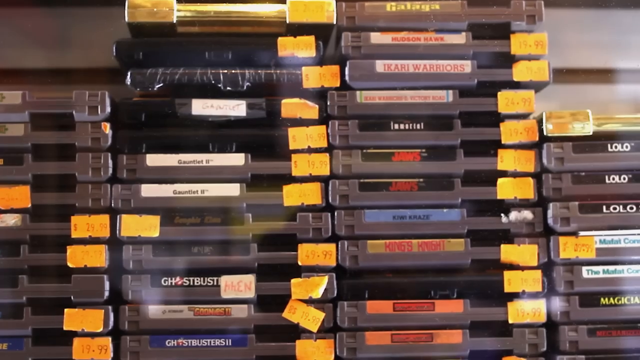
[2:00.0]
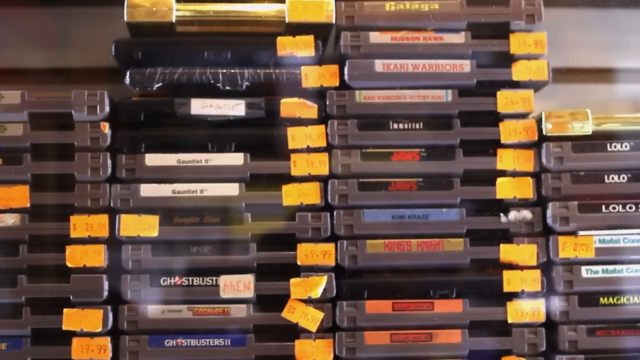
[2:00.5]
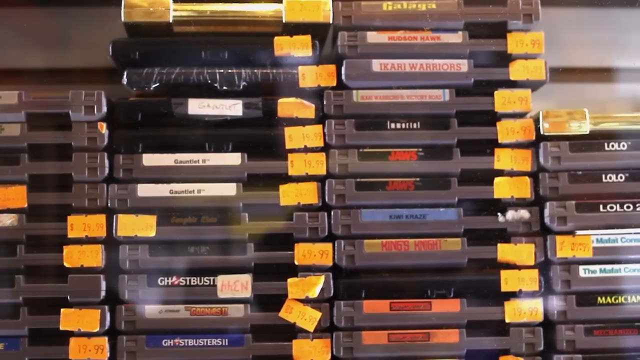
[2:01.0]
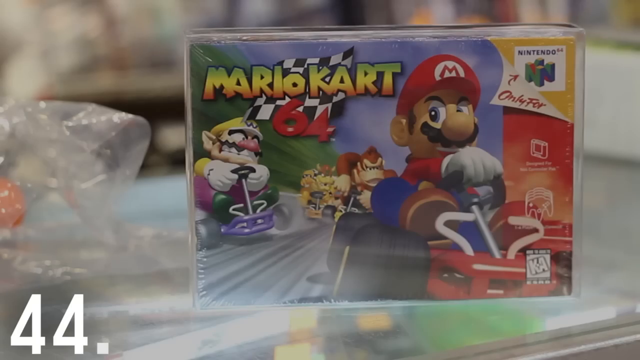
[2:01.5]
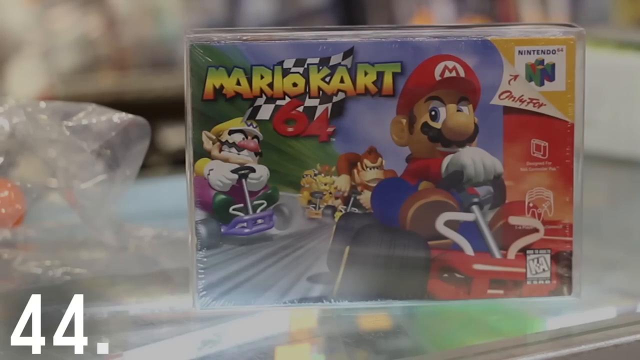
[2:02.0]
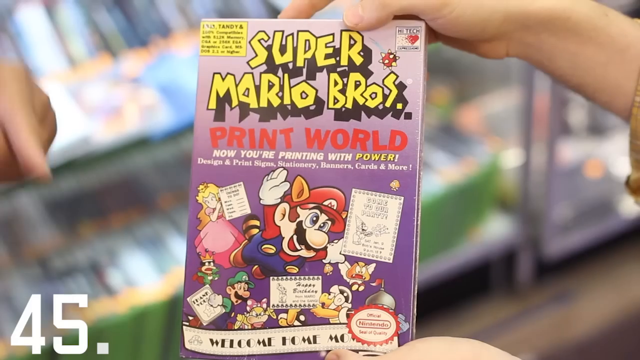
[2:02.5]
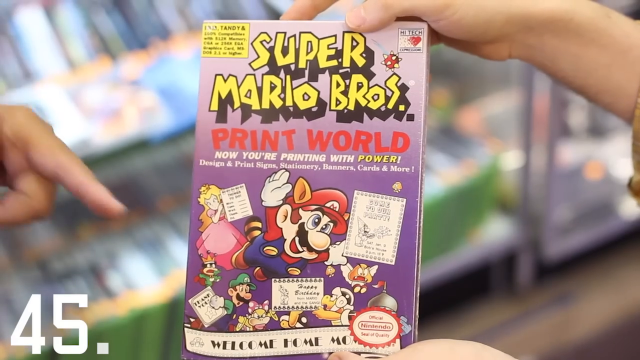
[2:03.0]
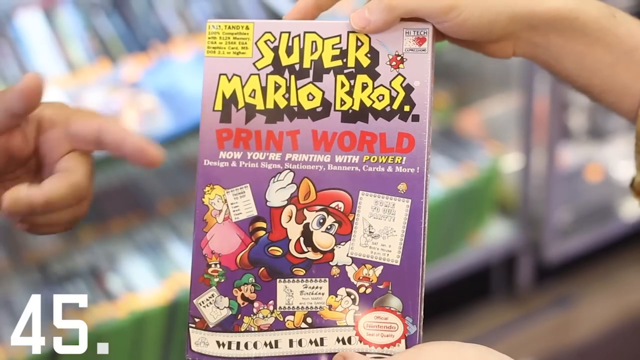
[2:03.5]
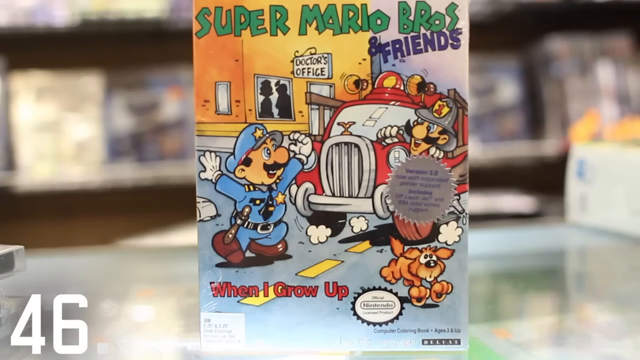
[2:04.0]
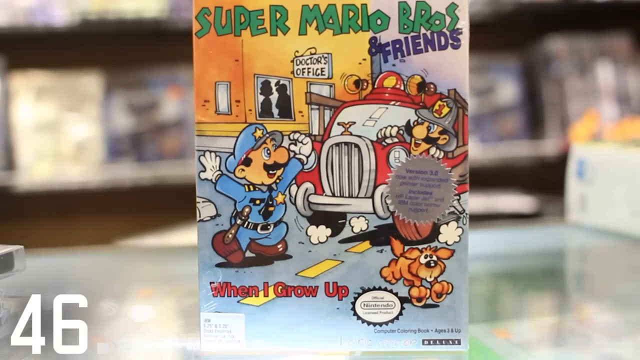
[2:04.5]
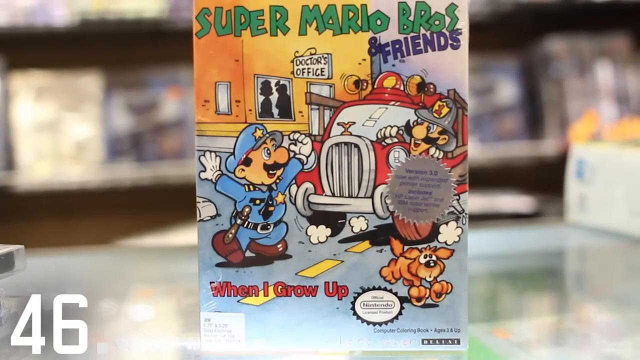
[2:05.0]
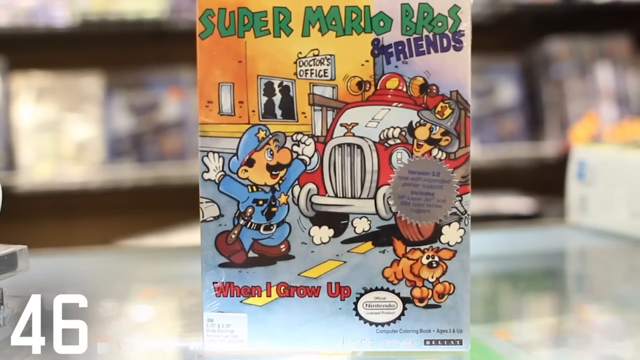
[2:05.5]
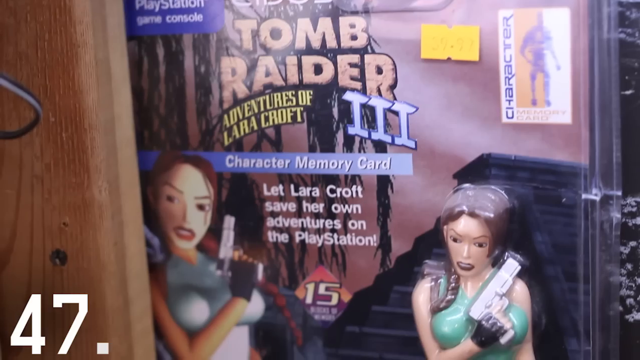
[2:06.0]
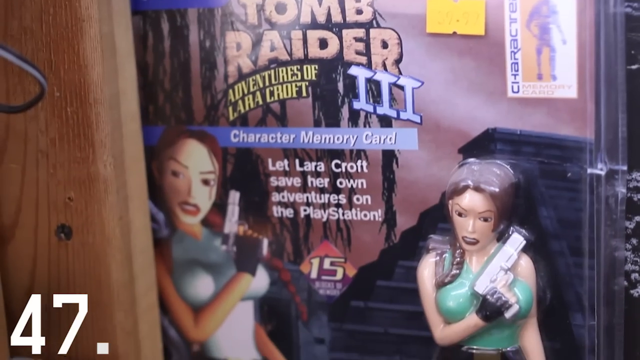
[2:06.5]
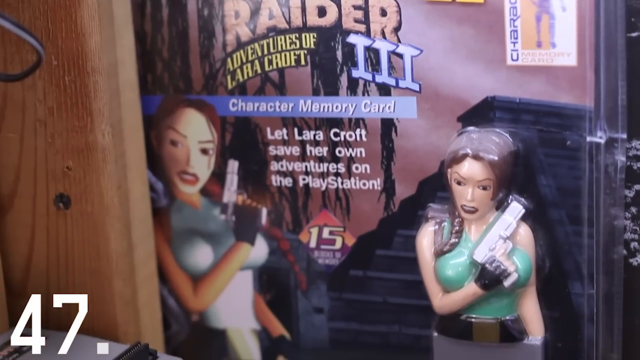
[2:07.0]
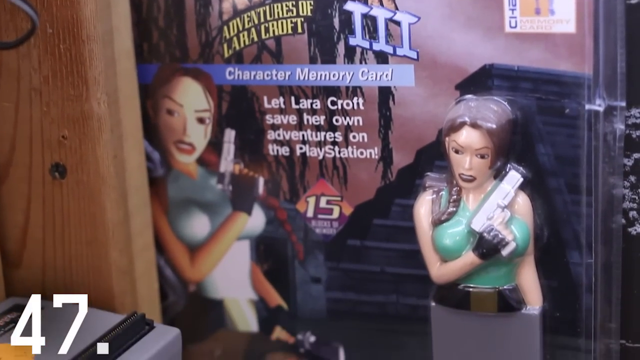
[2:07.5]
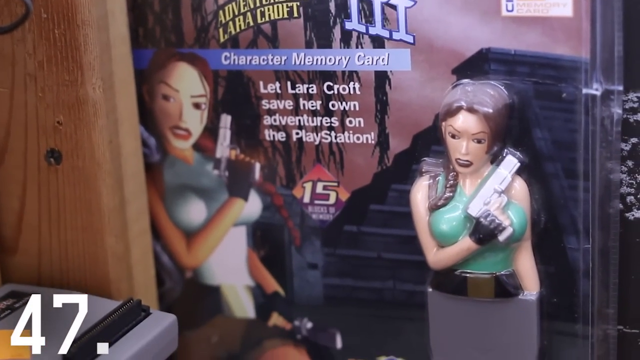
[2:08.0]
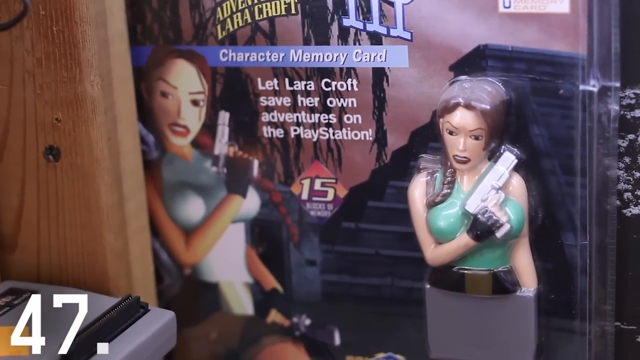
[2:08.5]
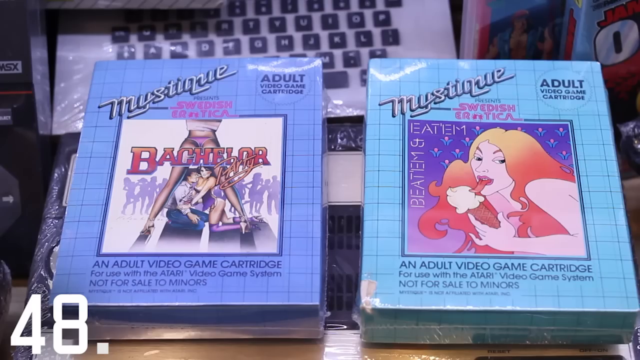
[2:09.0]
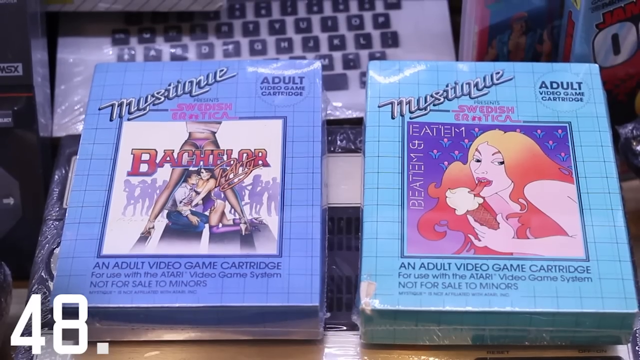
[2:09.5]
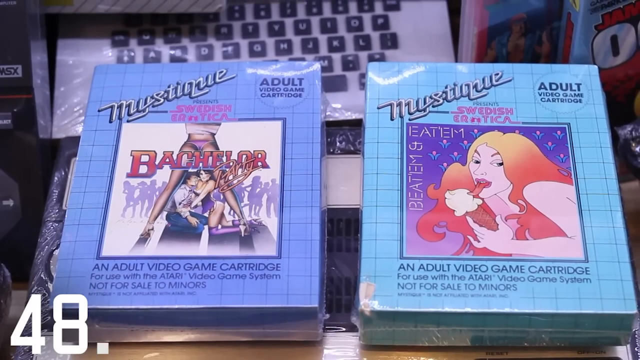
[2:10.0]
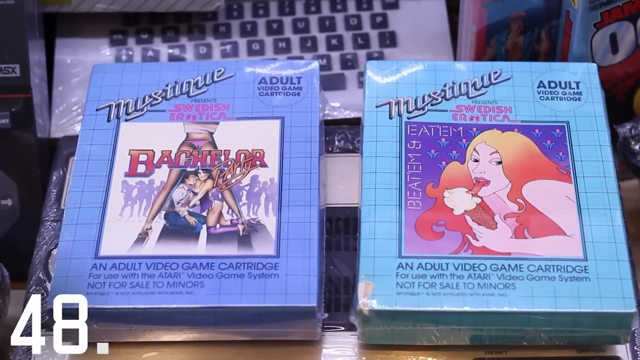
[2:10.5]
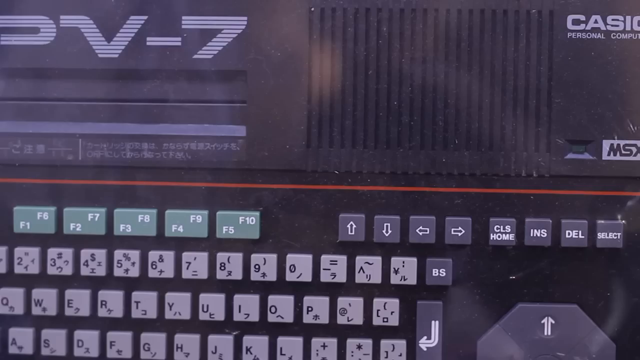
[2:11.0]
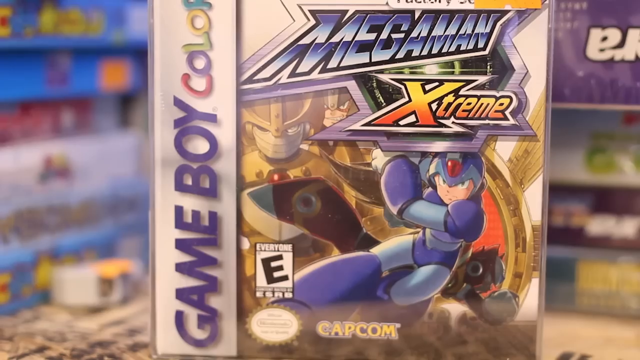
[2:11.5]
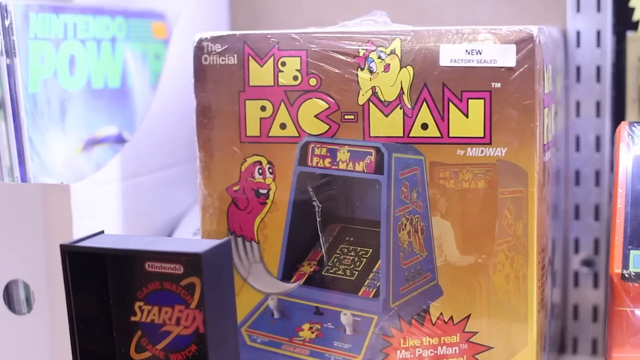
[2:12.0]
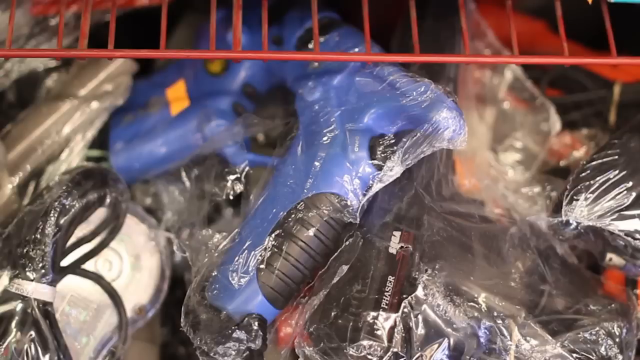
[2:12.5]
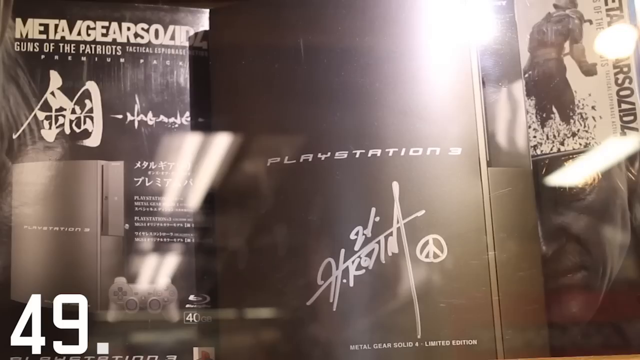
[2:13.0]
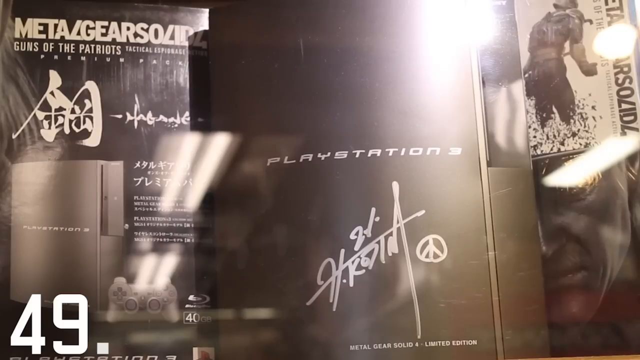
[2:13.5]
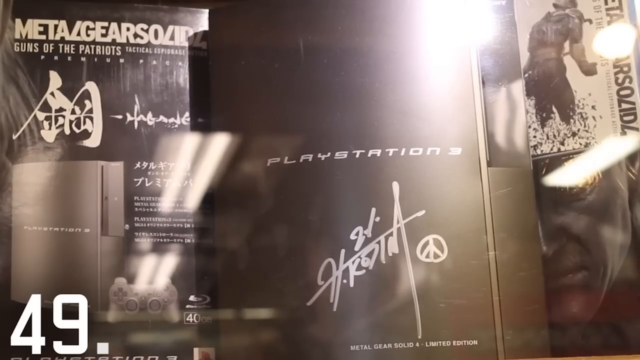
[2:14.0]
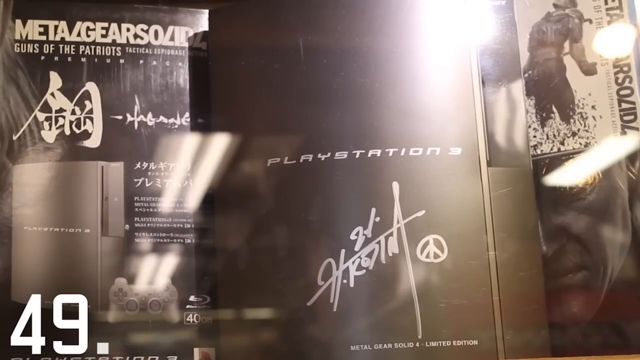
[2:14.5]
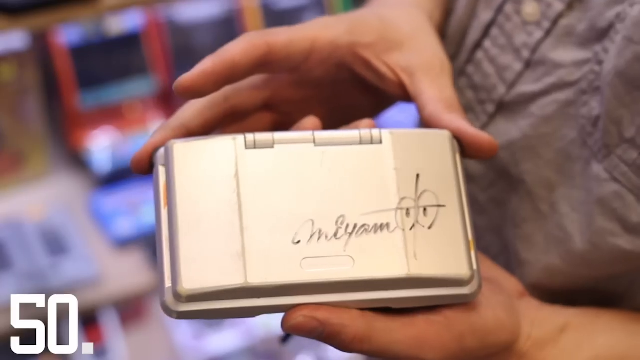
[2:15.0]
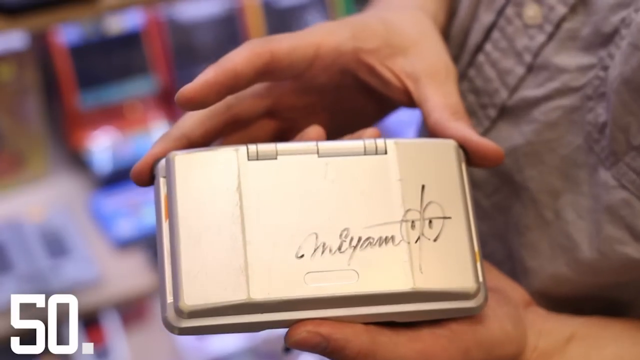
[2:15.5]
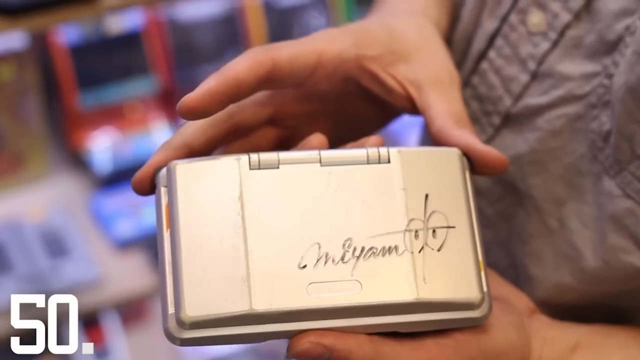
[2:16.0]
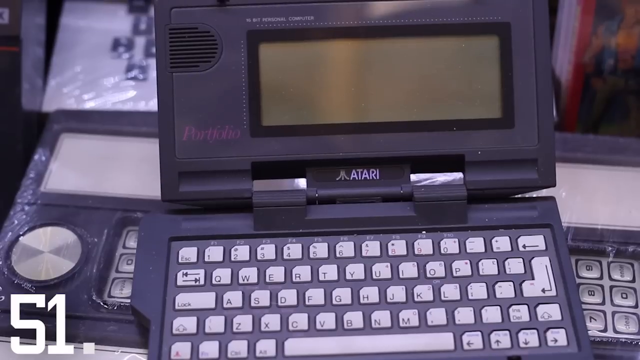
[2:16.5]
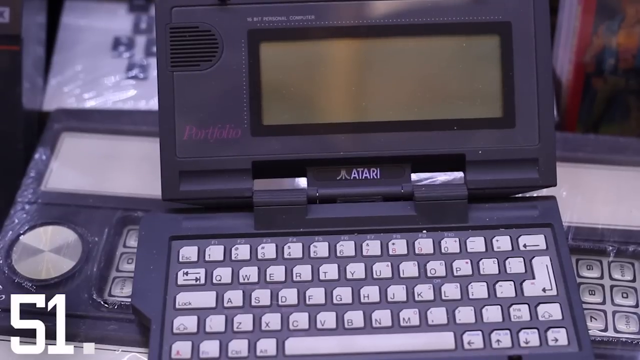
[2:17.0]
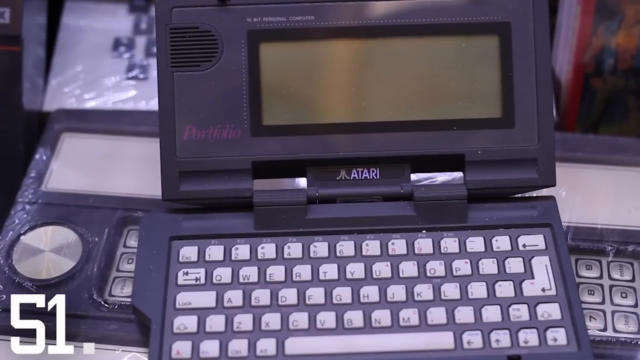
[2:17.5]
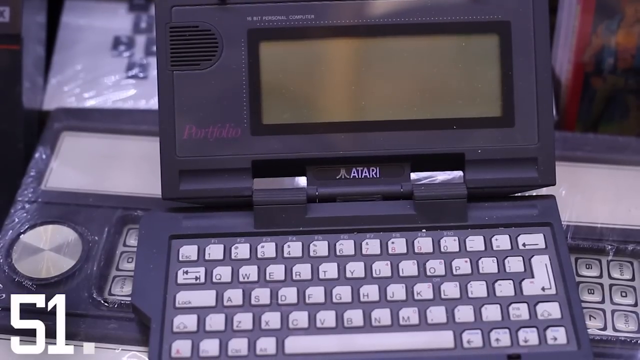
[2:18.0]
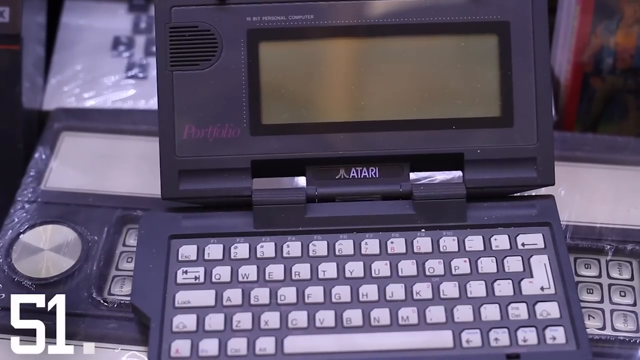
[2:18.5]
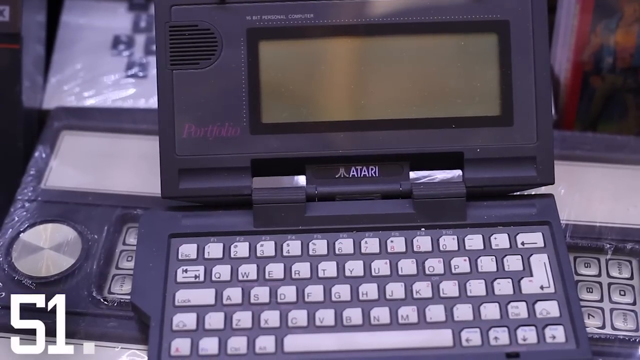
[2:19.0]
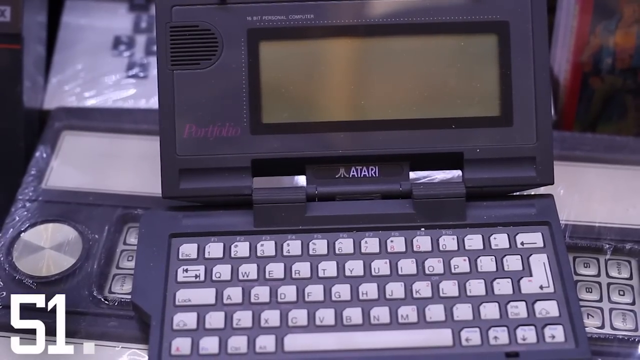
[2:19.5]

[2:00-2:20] A bunch of regular Nintendo cartridges are shown, with titles including Ghostbusters, Ikari Warriors, Jaws, King's Knight and Lolo. The video switches to a sealed box of Mario Kart 64 in what looks like a plexiglass or some kind of hard plastic case, also wrapped in cellophane. Next is something called "Super Mario Brothers Print World" with "Now you're printing with power," possibly a cartridge in its original box. Another box says "Nintendo Seal" at the bottom, "Super Mario and friends" at the top in green letters, and "in friends" in purple letters, with a doctor's office in the background and "when I grew up" at the bottom left in red letters. What looks like a Tomb Raider 3 cartridge, or some kind of product from that franchise, is shown. A couple of adult games follow: one called Mystique, Bachelor Party, and another apparently called Swedish Erotica.